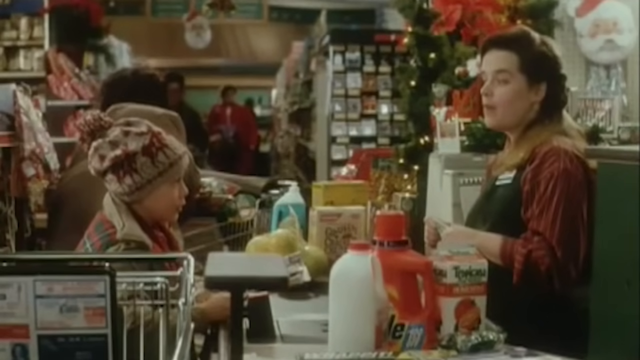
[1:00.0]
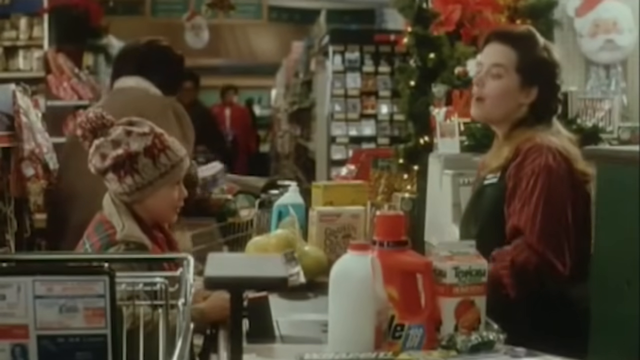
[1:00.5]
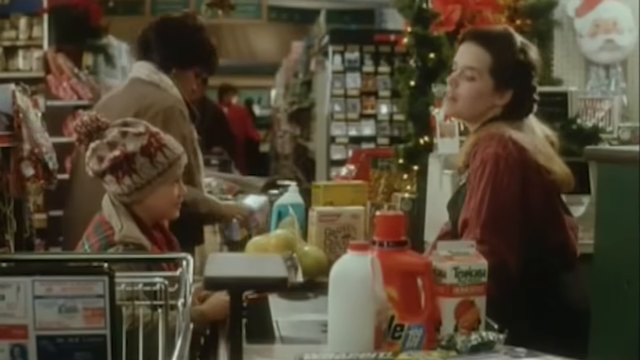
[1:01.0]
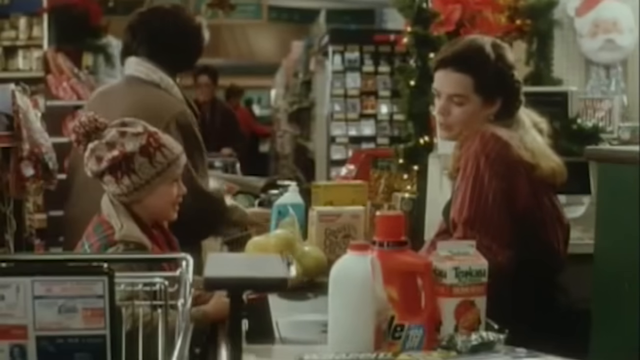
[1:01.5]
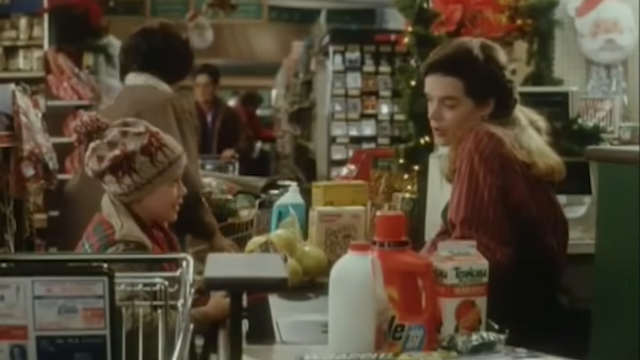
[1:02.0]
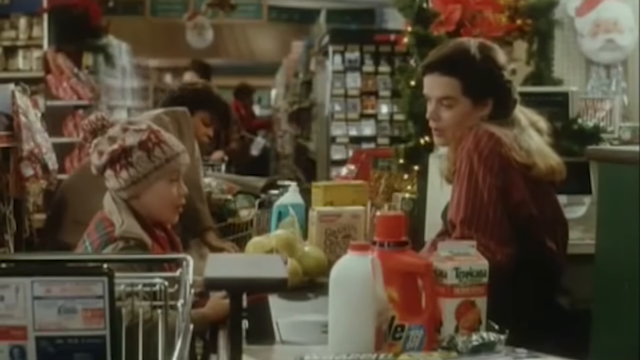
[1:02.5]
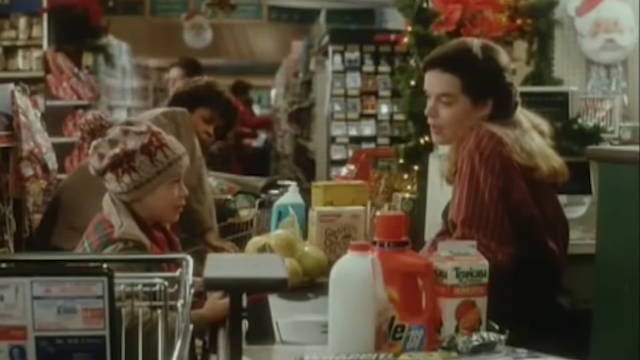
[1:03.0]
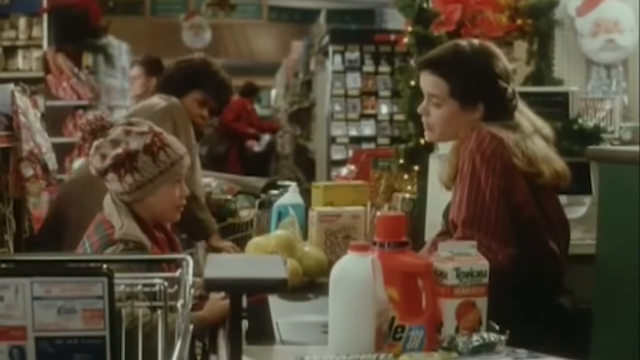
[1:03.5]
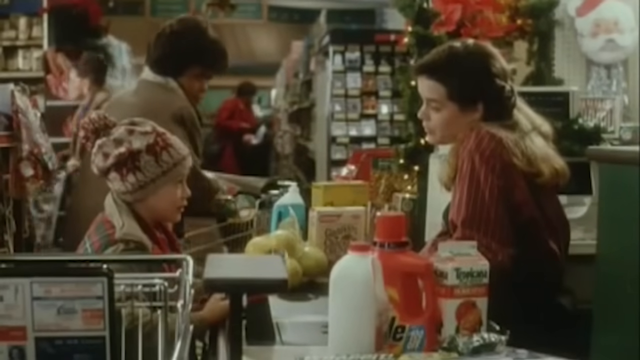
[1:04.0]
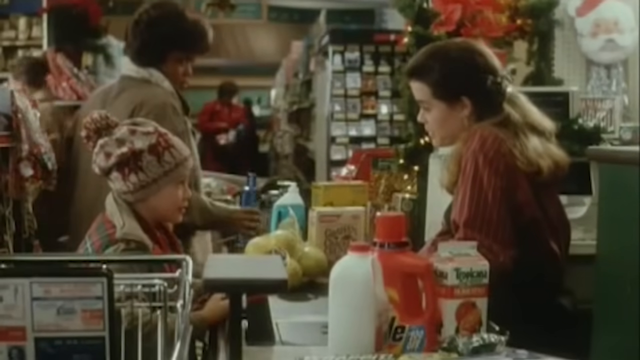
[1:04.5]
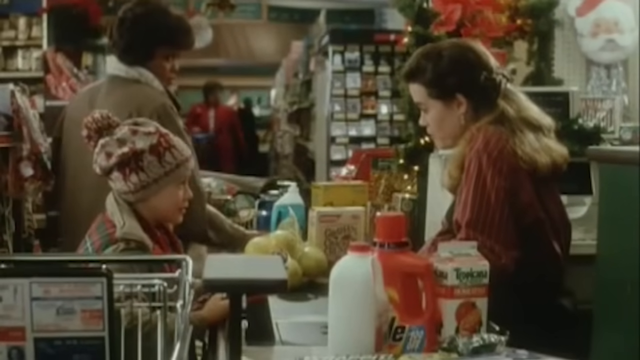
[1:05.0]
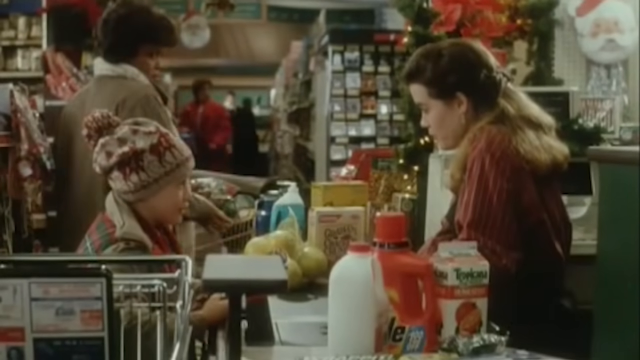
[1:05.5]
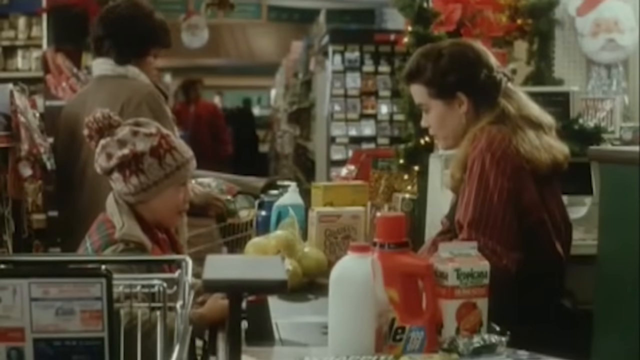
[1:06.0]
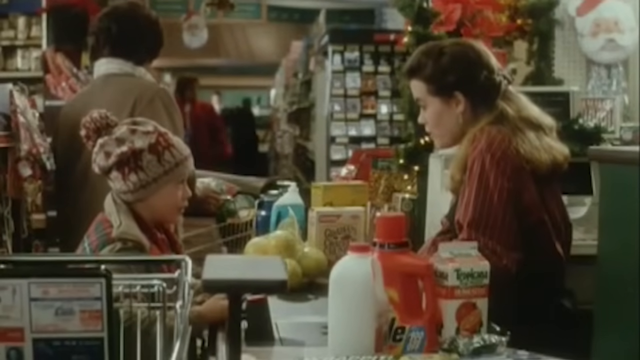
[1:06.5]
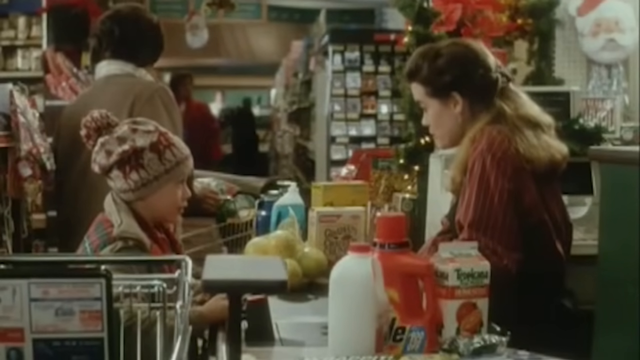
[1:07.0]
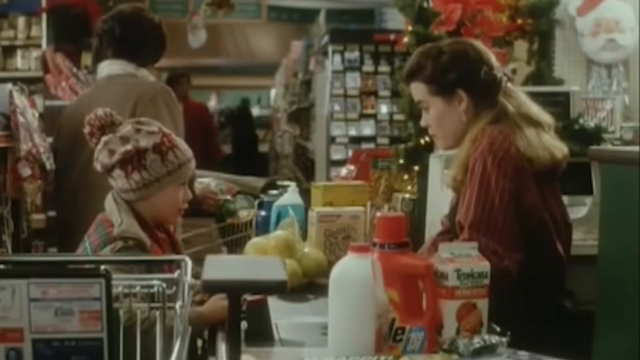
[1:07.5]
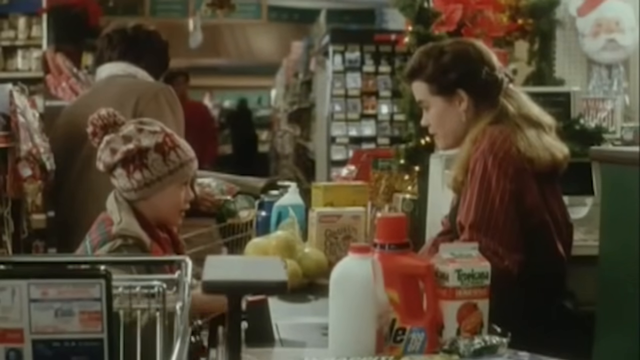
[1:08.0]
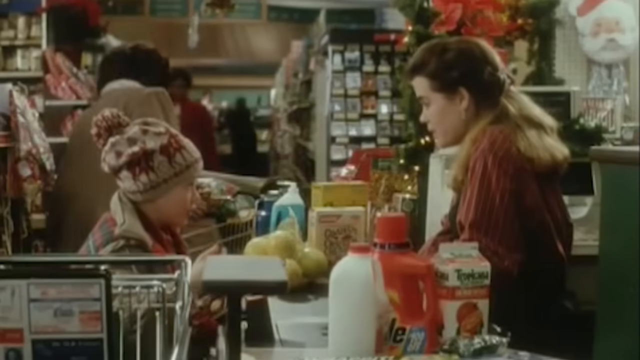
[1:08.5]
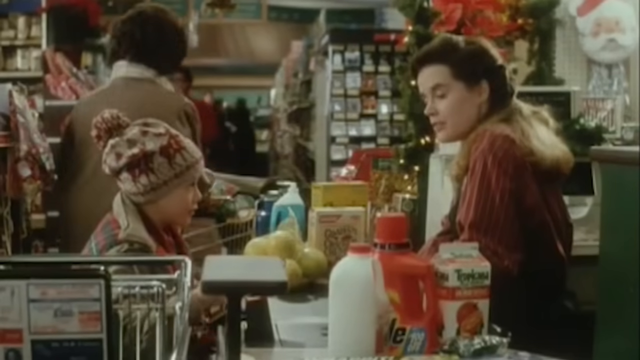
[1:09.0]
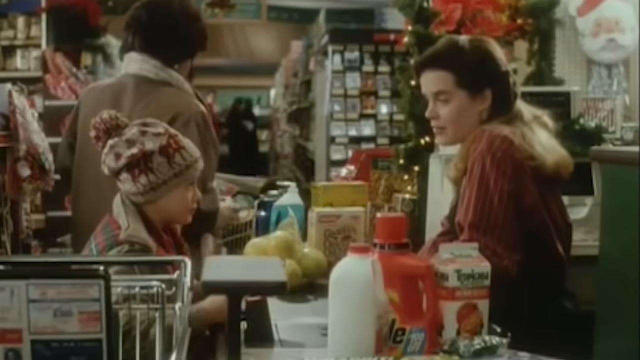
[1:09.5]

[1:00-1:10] Kevin is in the grocery line with groceries, some laundry items and an orange. He talks to the cashier, who wears a red and green outfit. Kevin has a hat with a picture of a stag on it. Behind him, people take groceries such as bananas and boxes from a shopping cart to the checkout line. The cashier keeps talking with young Kevin, and a money counter is on the right side. After some talk, Kevin pulls up a newspaper he wants to pay for. Christmas decorations are behind them, including Santa on some circles wearing a red hat, and the whole shop is decorated in a Christmas style.